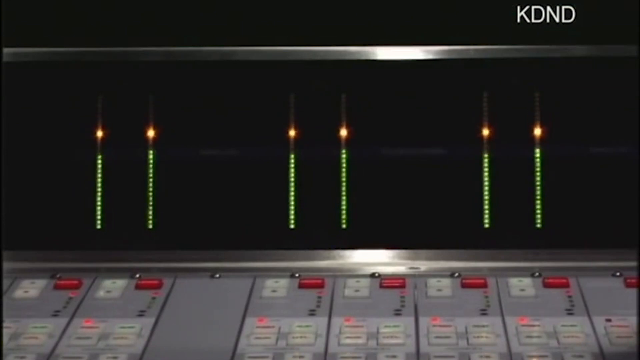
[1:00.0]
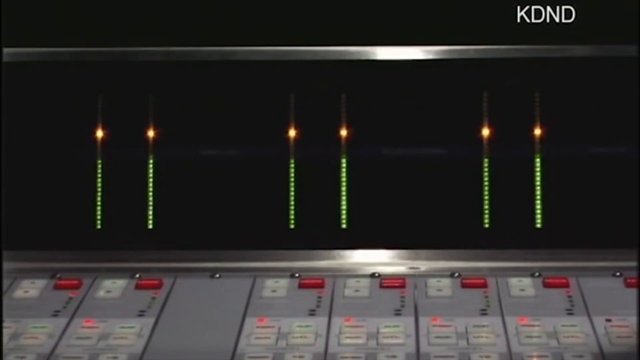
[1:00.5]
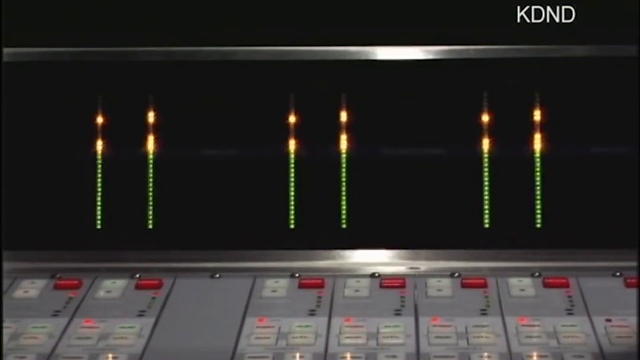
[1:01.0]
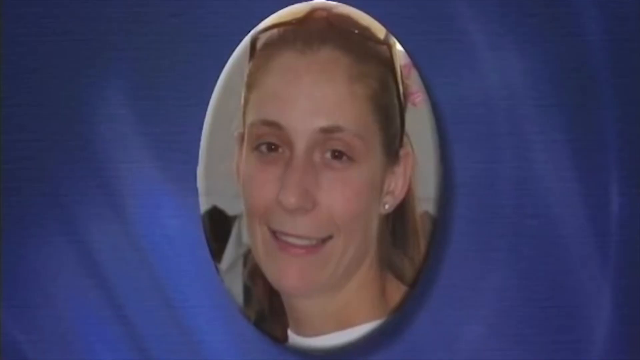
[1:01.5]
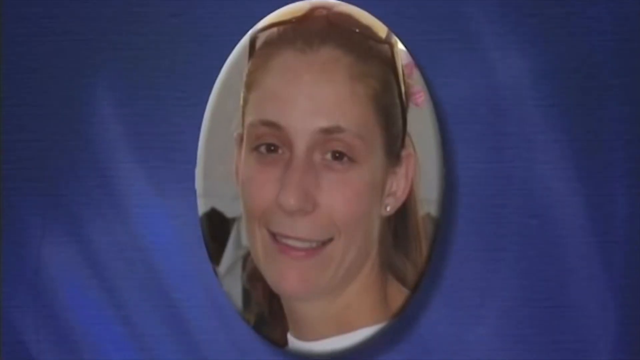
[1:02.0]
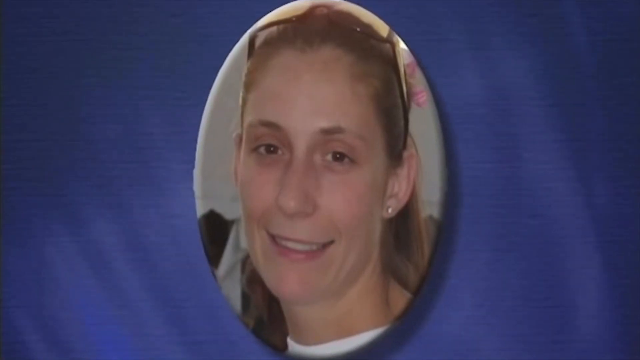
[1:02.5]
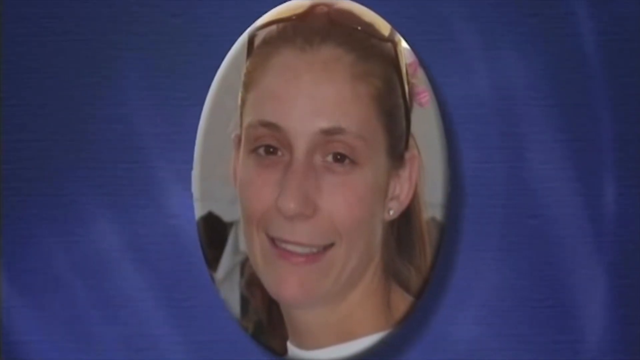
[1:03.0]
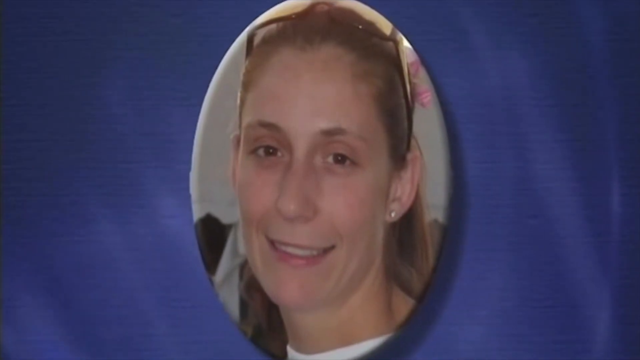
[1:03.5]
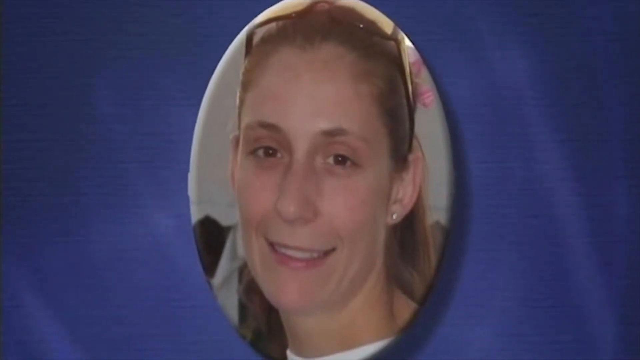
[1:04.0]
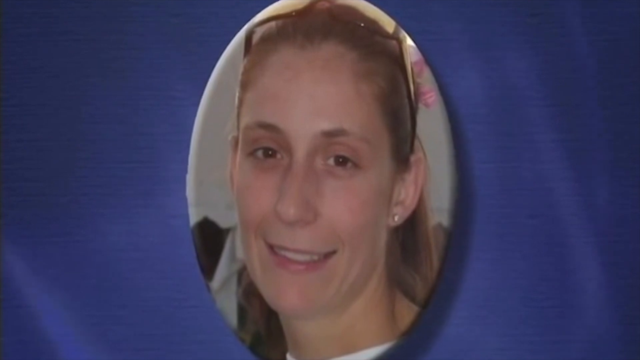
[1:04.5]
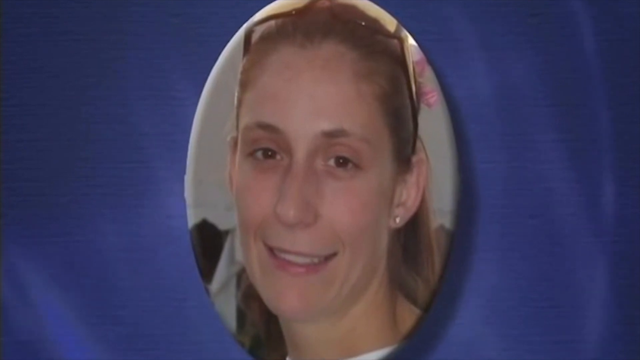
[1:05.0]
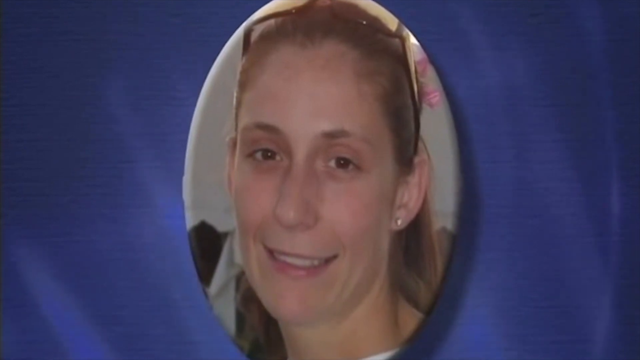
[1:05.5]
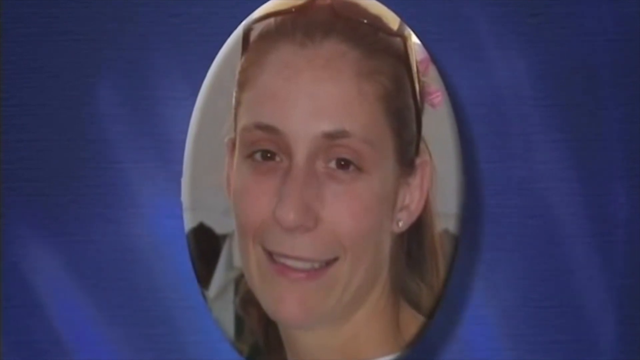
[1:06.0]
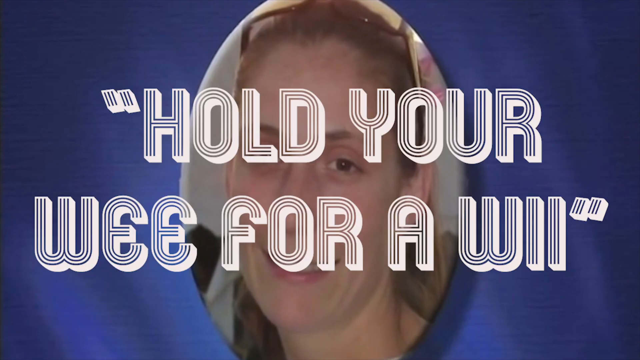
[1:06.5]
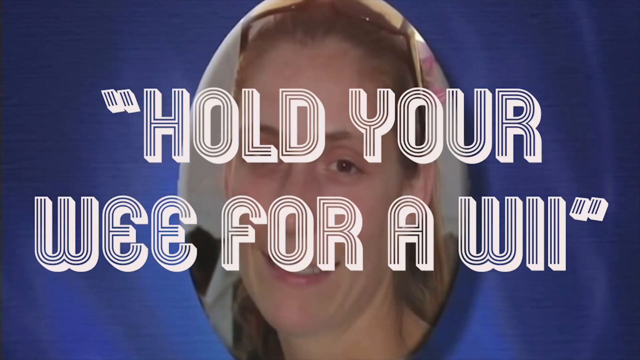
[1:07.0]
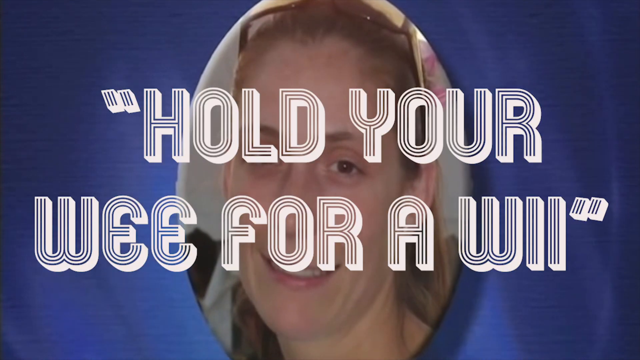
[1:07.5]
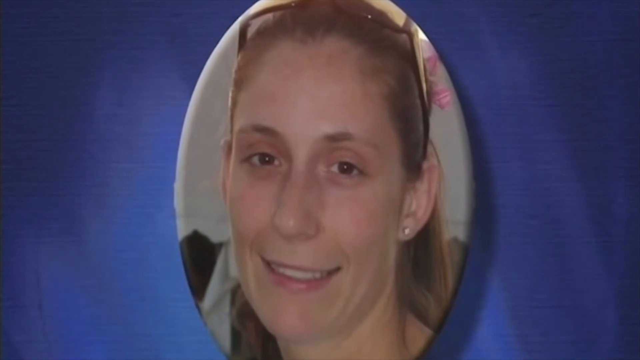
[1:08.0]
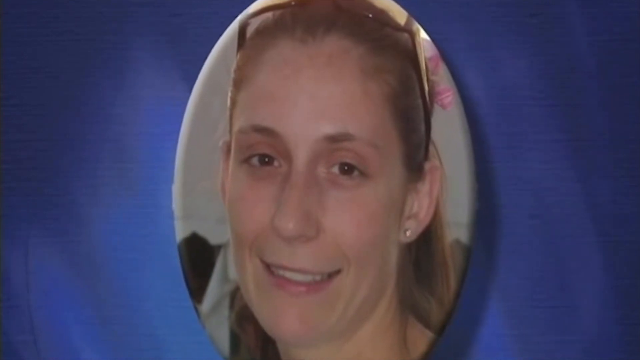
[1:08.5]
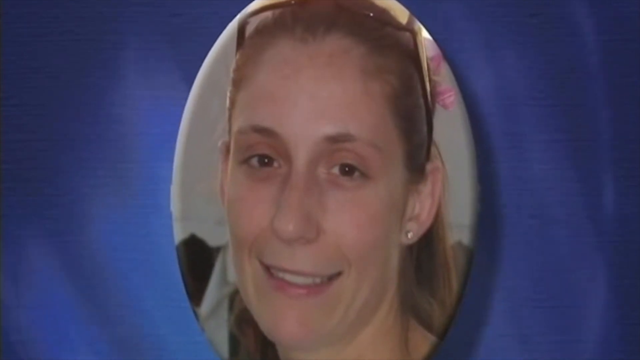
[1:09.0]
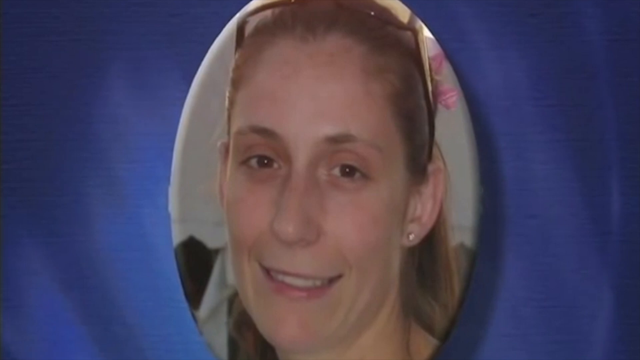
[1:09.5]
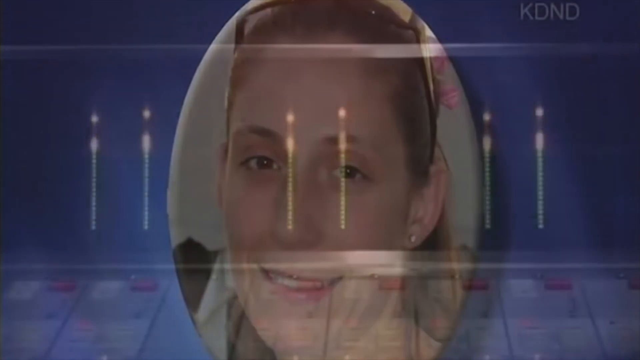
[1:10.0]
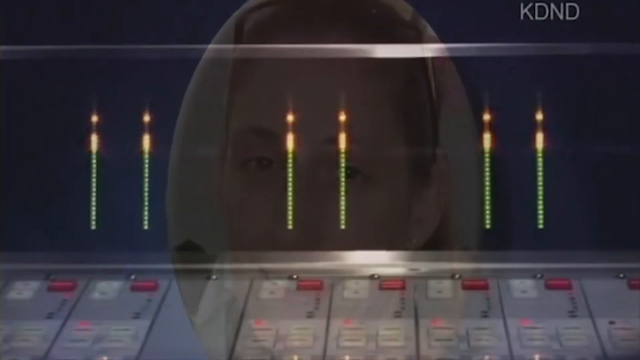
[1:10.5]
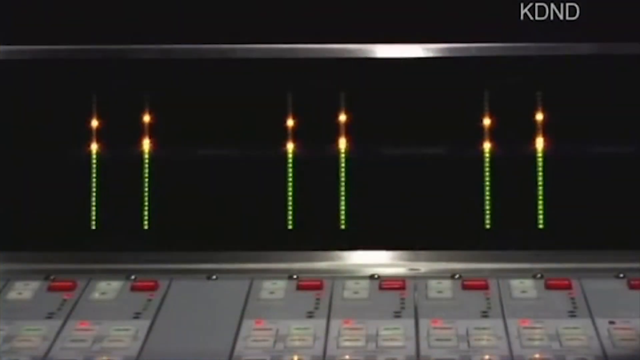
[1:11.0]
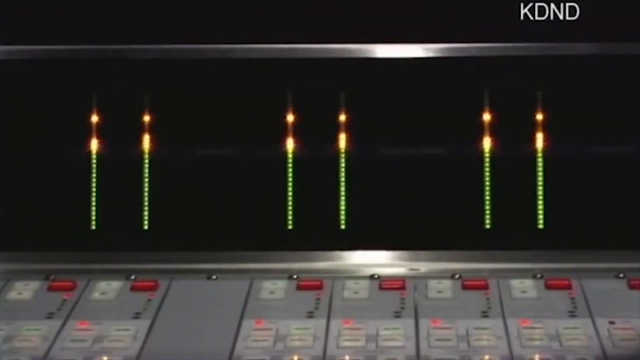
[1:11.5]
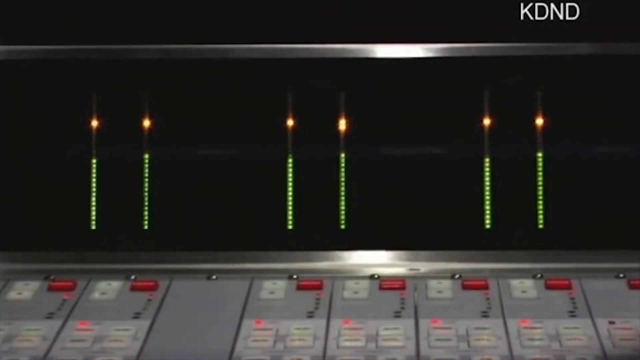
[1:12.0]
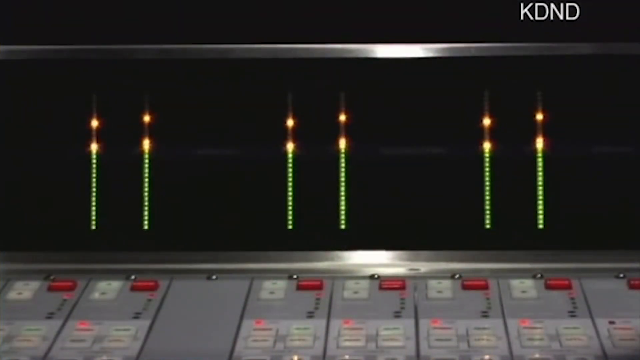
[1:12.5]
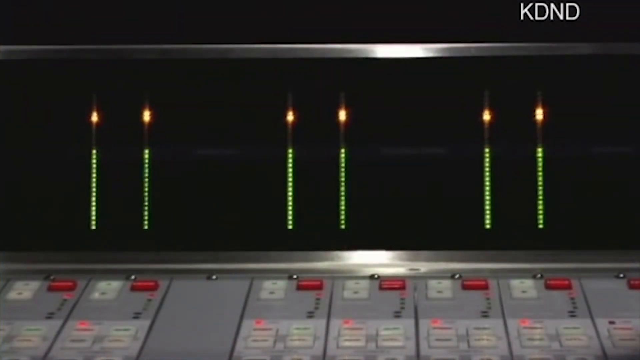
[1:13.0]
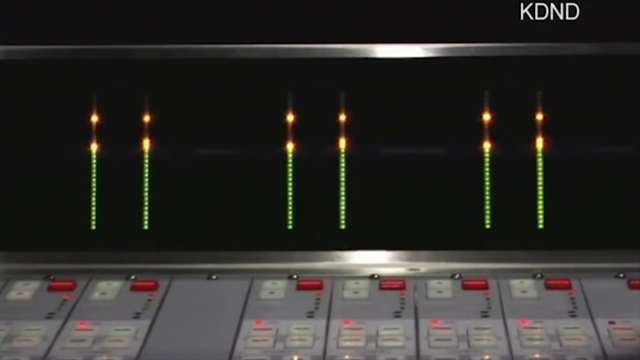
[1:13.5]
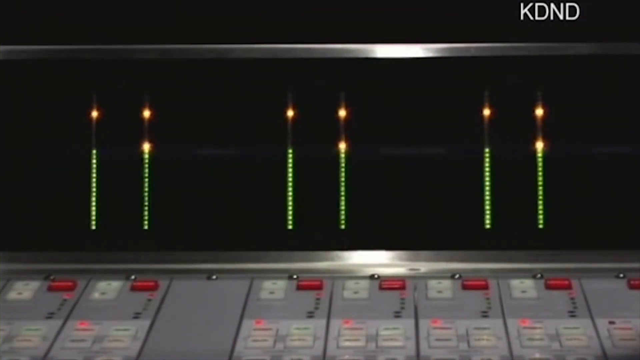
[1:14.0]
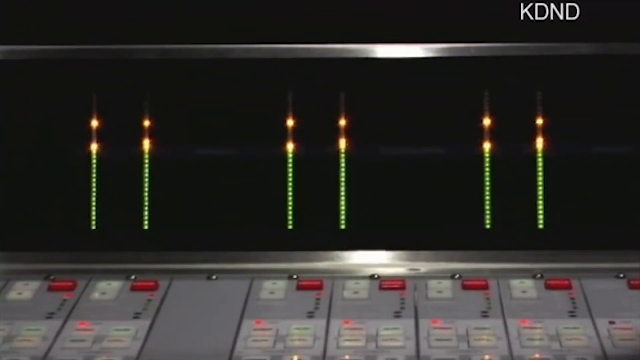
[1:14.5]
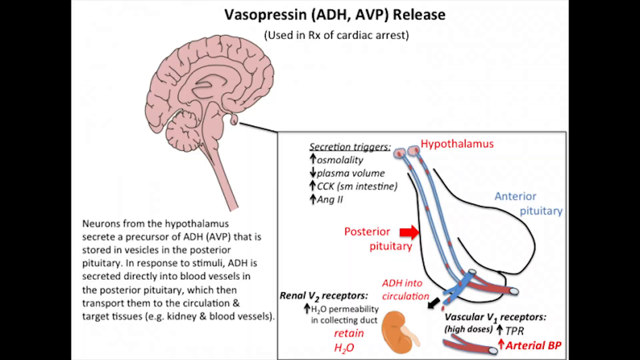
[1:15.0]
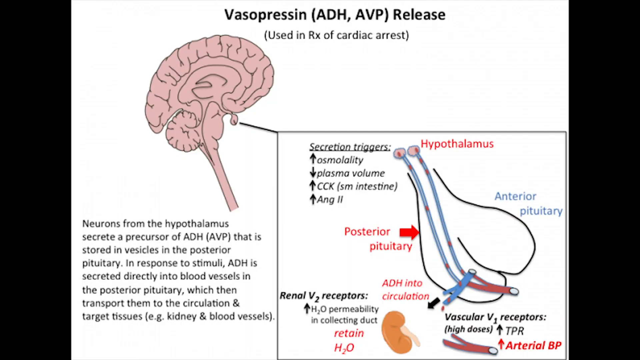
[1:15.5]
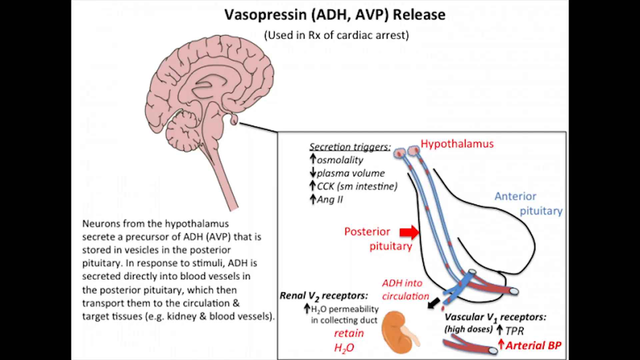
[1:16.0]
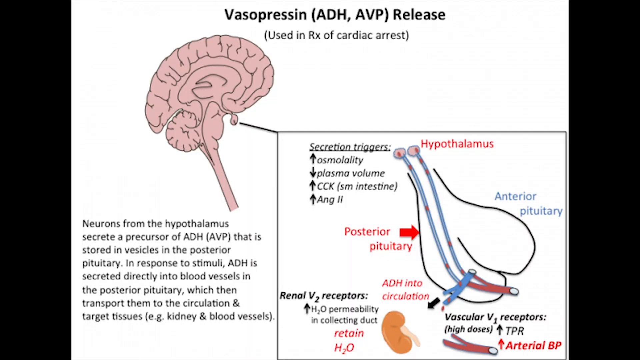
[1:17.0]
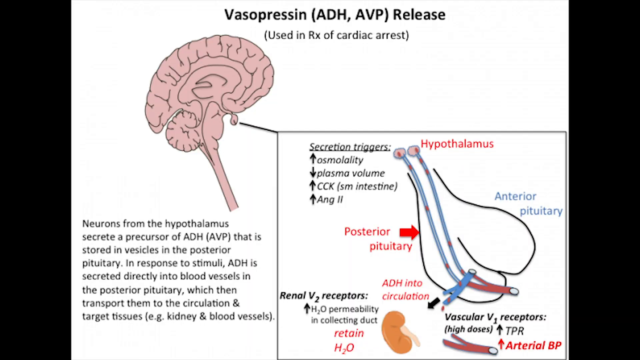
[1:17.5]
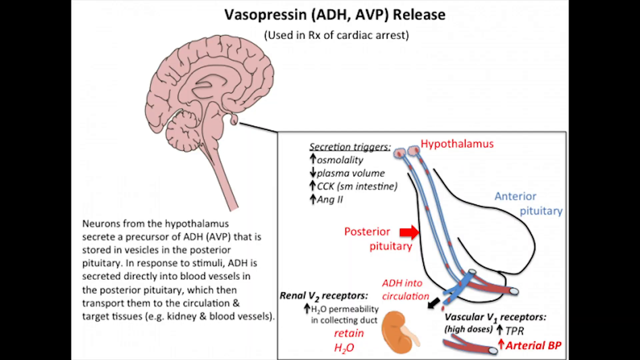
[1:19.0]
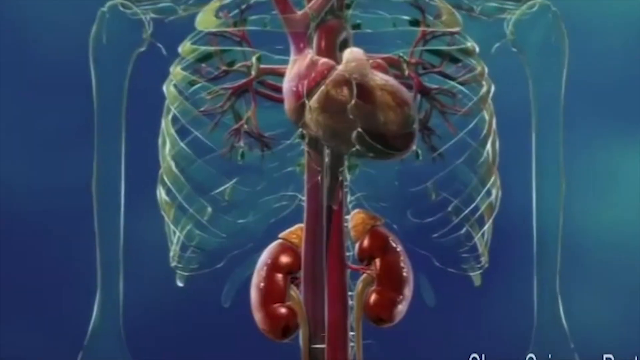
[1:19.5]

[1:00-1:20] A large control panel is shown. The interface section is analog, with multiple white buttons, each with a large red button next to it. The screen shows multiple green bars slowly going up and down. The video cuts to a portrait photograph of a woman on a blue background; she is smiling toward the camera with brown-rimmed glasses placed atop her head. The shot slowly zooms in on the picture, and text appears on the screen that reads "hold your wee for a wee." The video cuts back to the analog control panel, where the green lines on the screen bounce up and down, apparently in response to sound. It then cuts to a still, flat drawn image with multiple lines of text and a sideways drawing of a brain in the top left corner. The text reads: "vasopressin ADH-AVP release used in Rx of cardiac arrest. Neurons from the hypothalamus secrete a precursor of ADH-AVP that is stored in vesicles in the posterior pituitary. In response to stimuli, ADH is secreted directly into blood vessels in the posterior pituitary which then transports them to the circulation and target tissues e.g. kidney and blood vessels."